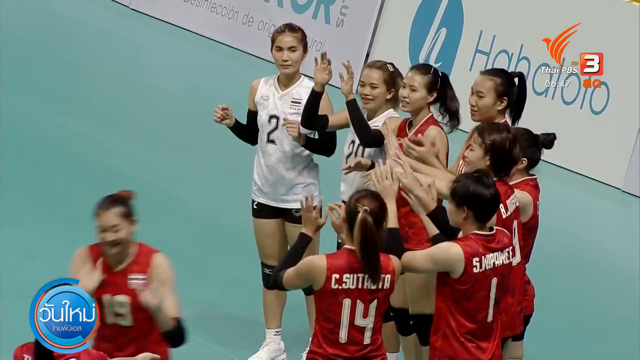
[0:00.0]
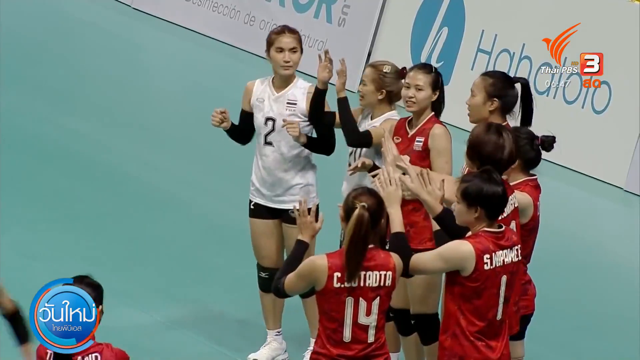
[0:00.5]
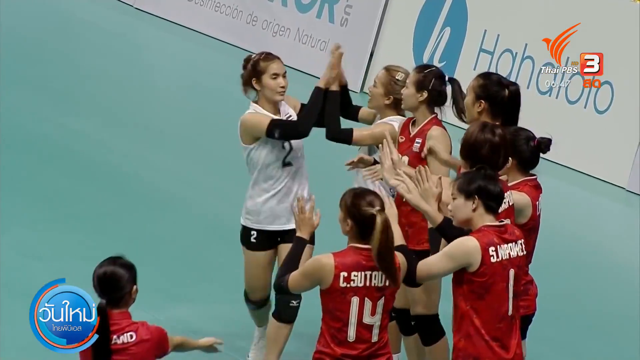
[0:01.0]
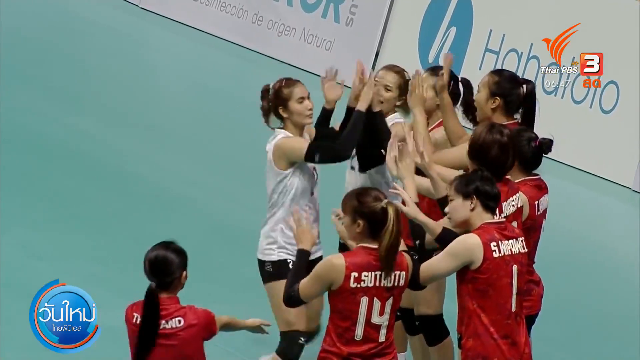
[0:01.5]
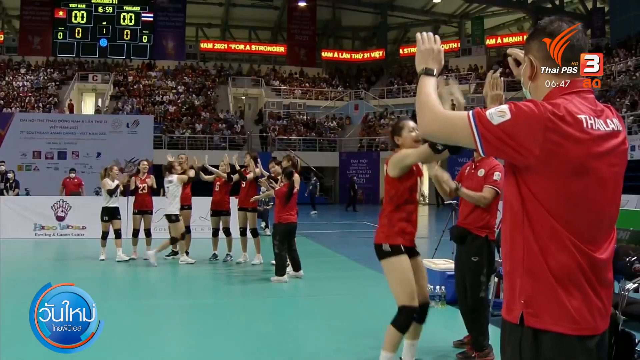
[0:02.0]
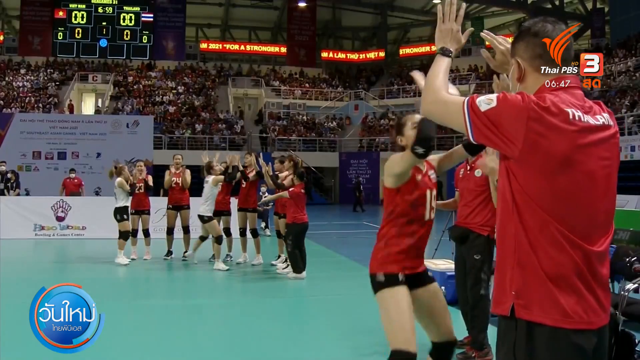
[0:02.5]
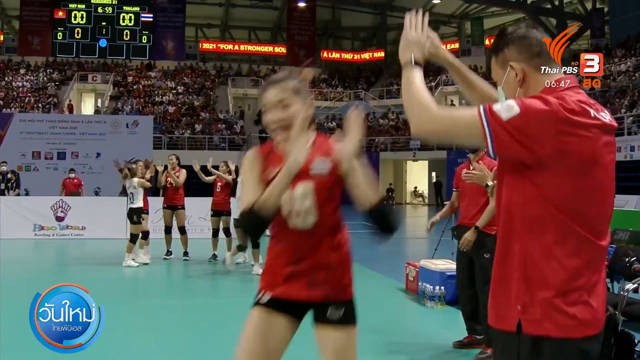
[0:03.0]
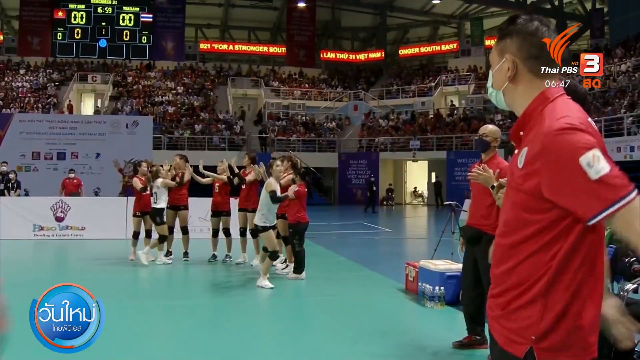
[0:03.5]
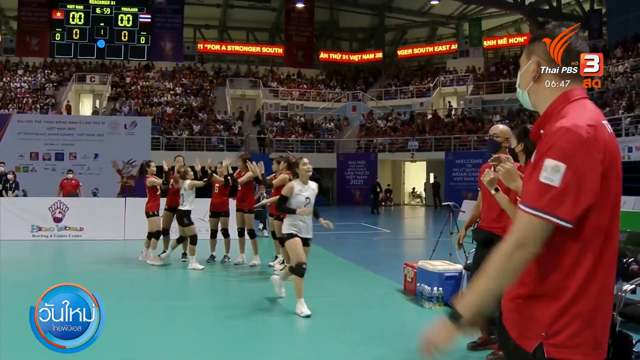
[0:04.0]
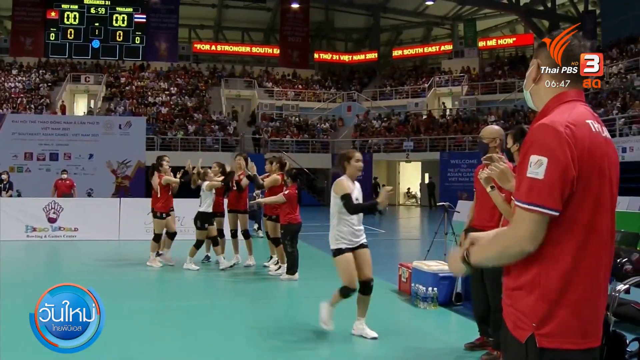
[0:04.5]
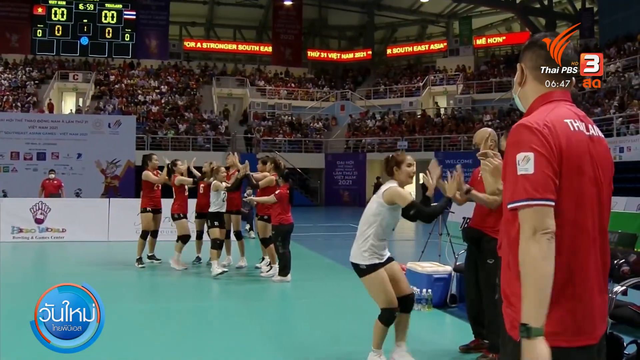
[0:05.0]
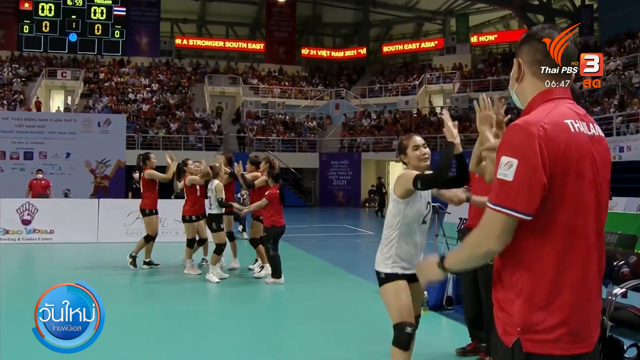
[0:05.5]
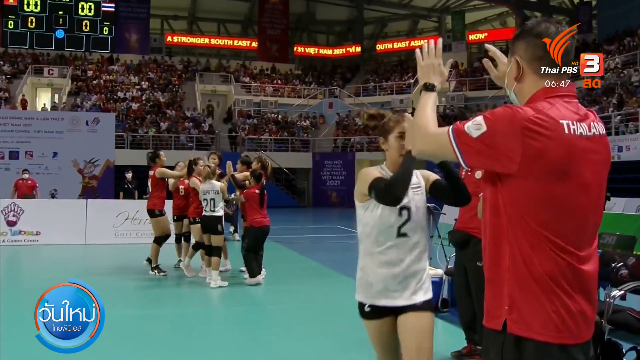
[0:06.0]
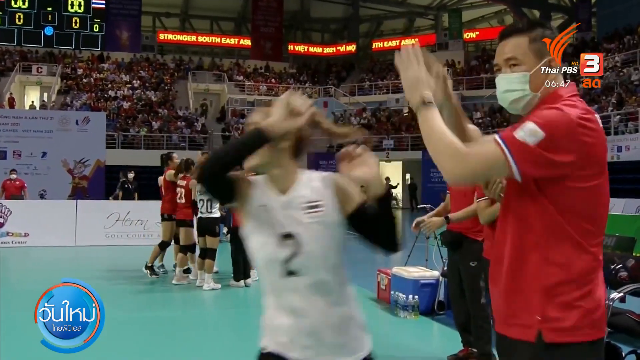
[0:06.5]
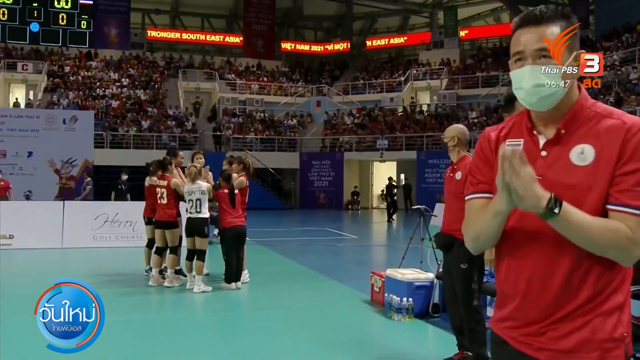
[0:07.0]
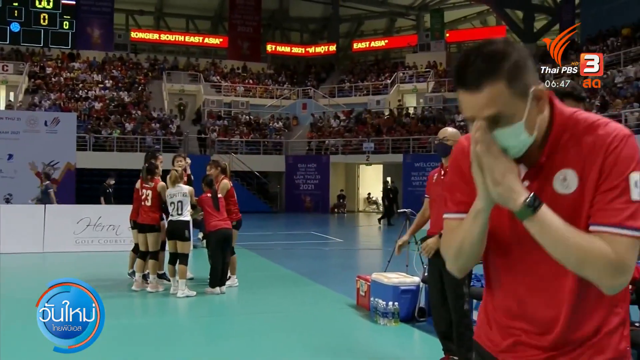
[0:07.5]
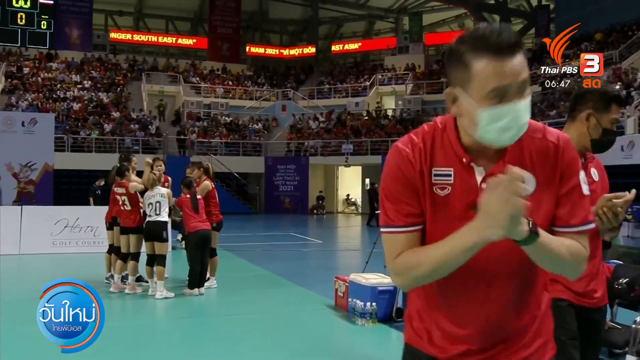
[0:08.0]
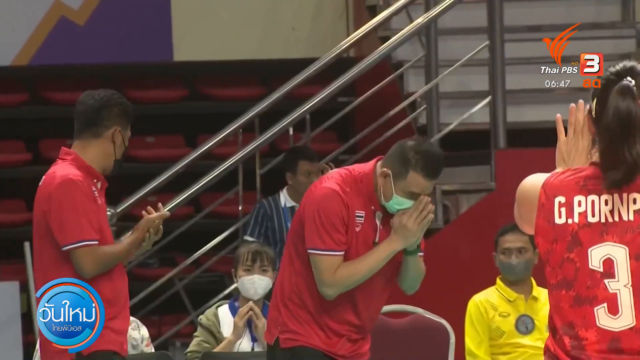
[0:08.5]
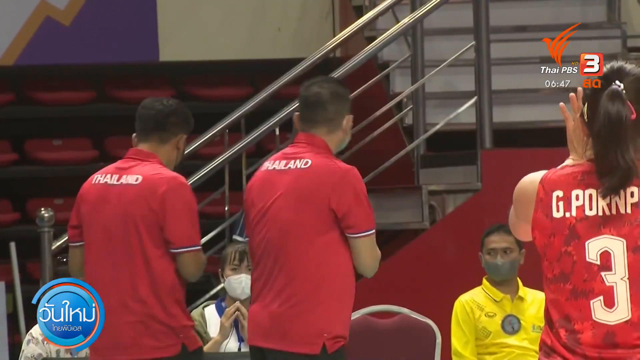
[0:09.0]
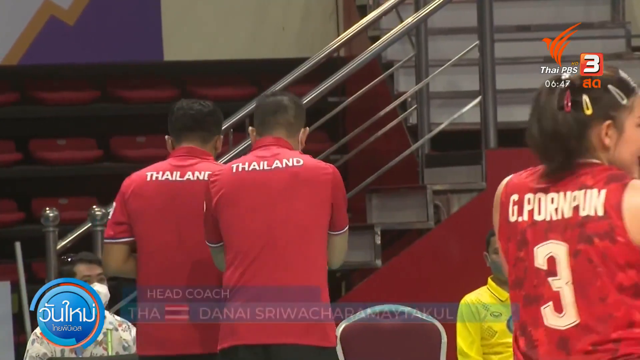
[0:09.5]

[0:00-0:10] What appears to be a volleyball team of Asian women seems to be about to start a match. The players give high fives to the coaches, and a coach bows to everyone. It is a Thailand team, as shown on their jerseys. The players wear shorts and knee pads. Everyone is in red, except that the back players apparently wear white. Players come out onto the court, and a group of players at the back, possibly bench players, seem to be getting ready. The match is in a large arena, sort of like an Olympic-style regulation arena, which appears to be pretty full, with a real crowd. There is a big scoreboard and a hard floor in teal and blue.